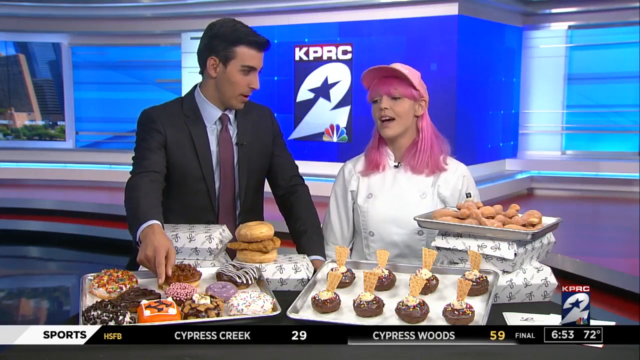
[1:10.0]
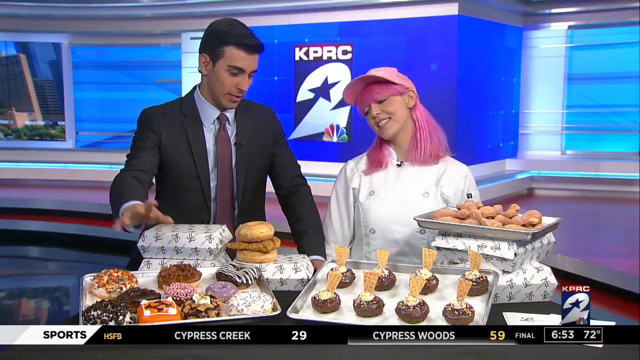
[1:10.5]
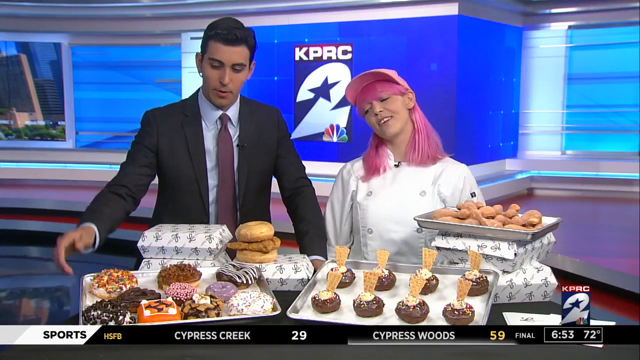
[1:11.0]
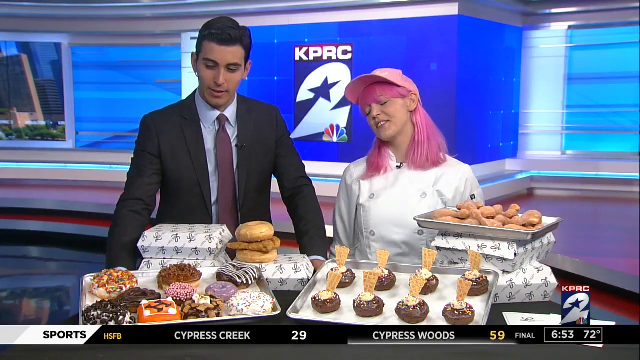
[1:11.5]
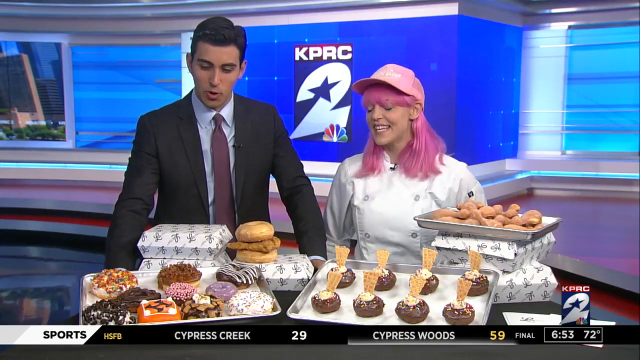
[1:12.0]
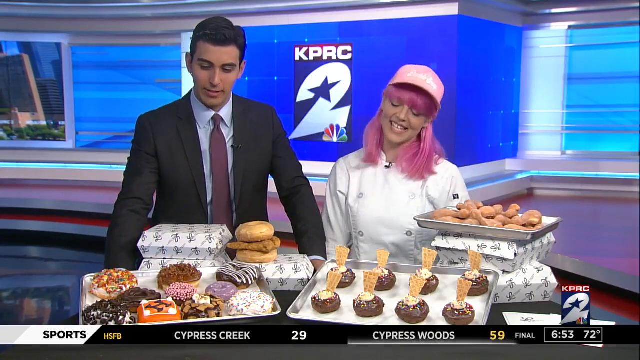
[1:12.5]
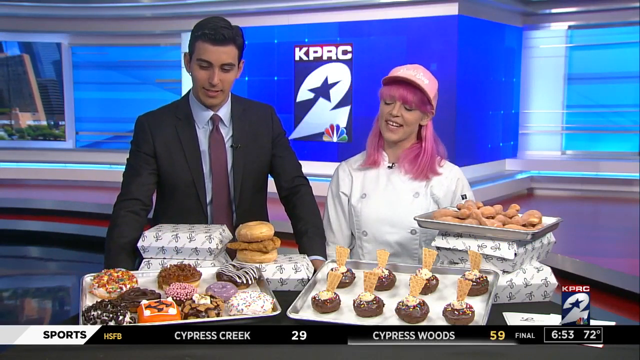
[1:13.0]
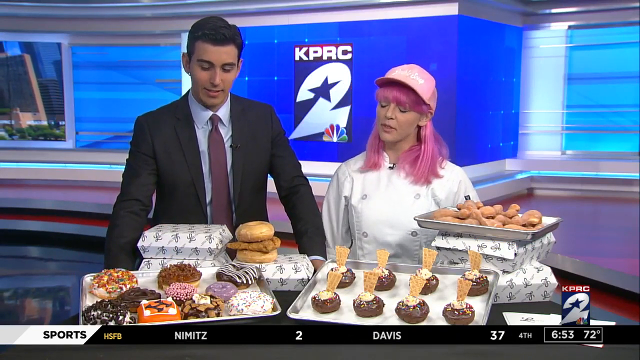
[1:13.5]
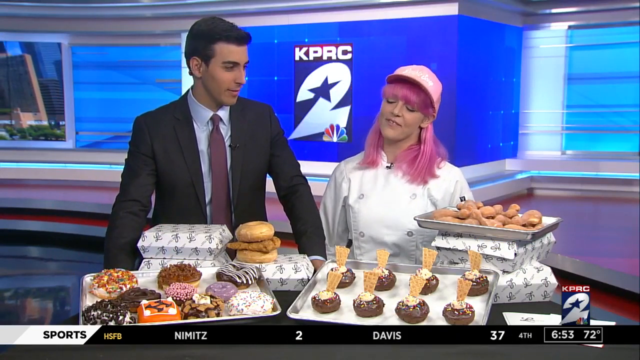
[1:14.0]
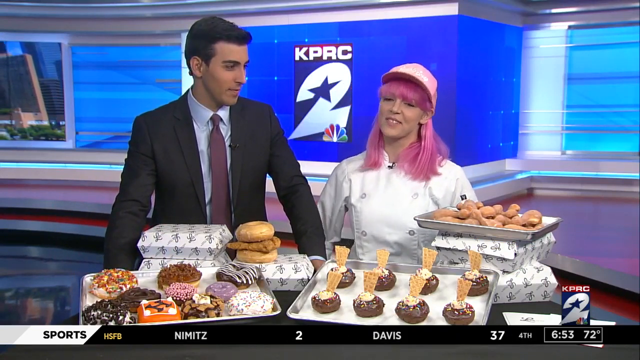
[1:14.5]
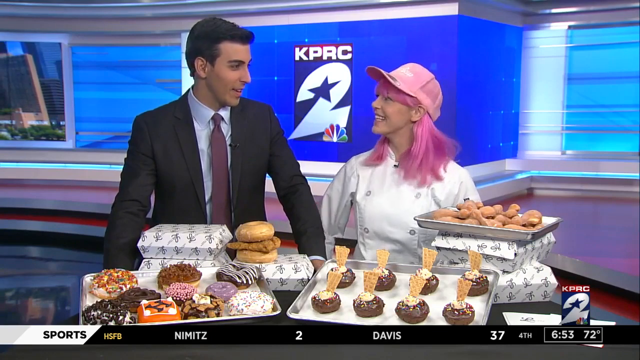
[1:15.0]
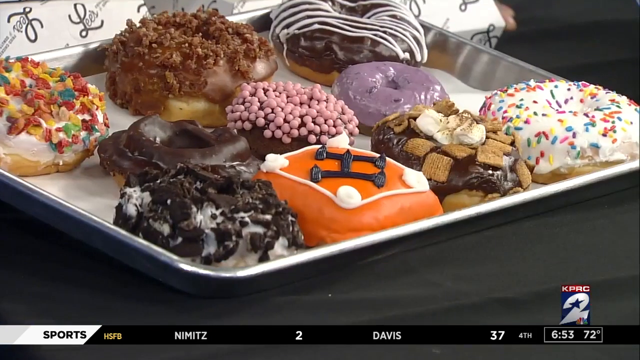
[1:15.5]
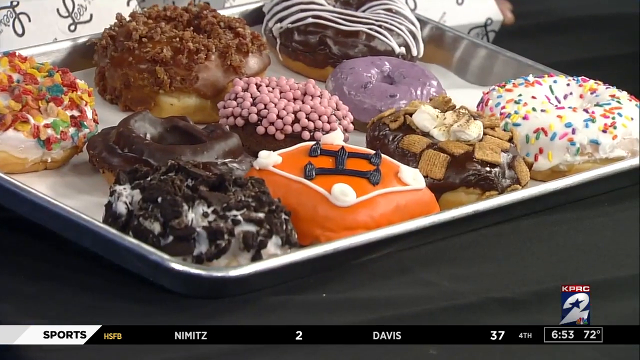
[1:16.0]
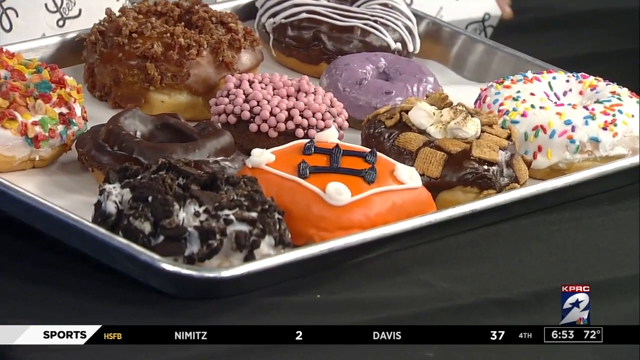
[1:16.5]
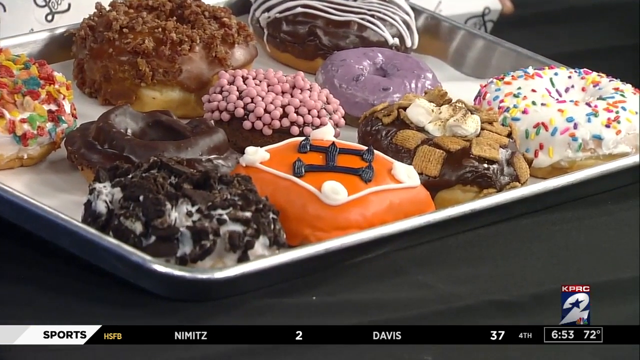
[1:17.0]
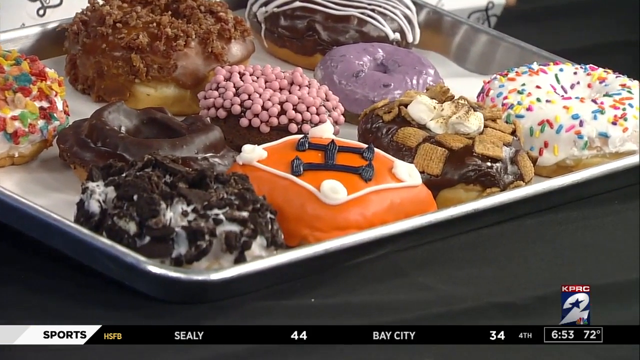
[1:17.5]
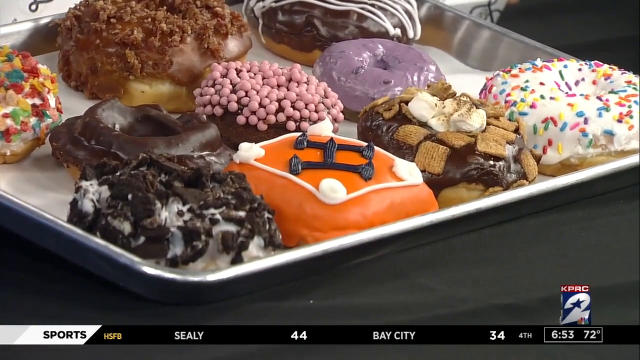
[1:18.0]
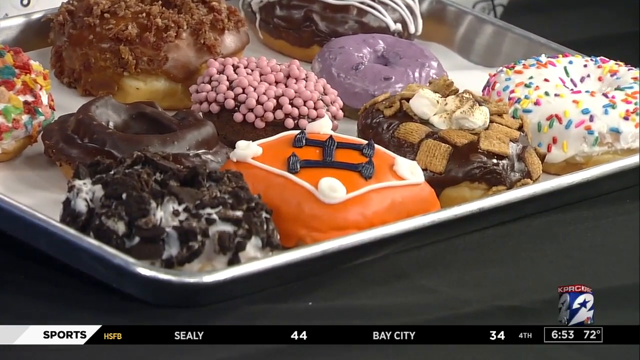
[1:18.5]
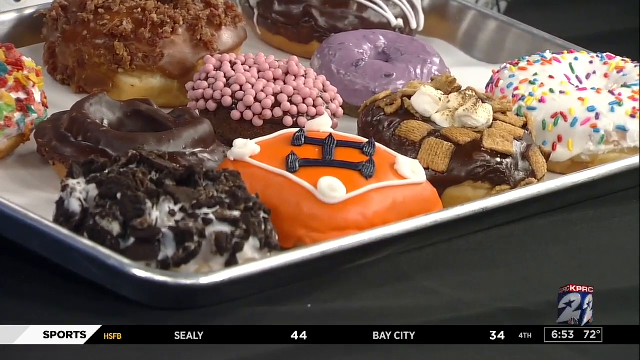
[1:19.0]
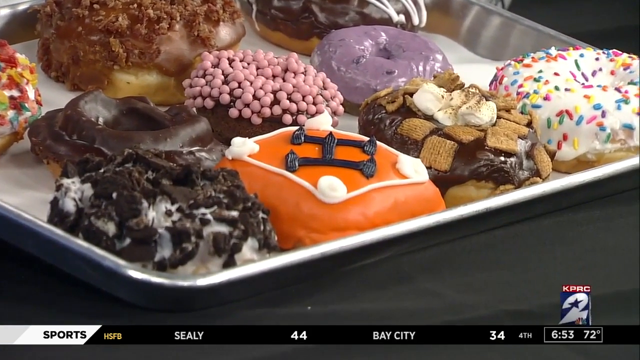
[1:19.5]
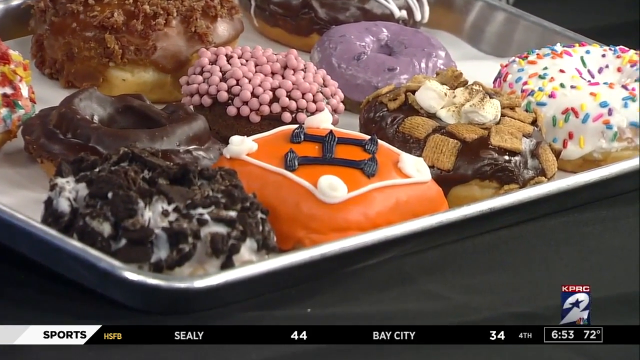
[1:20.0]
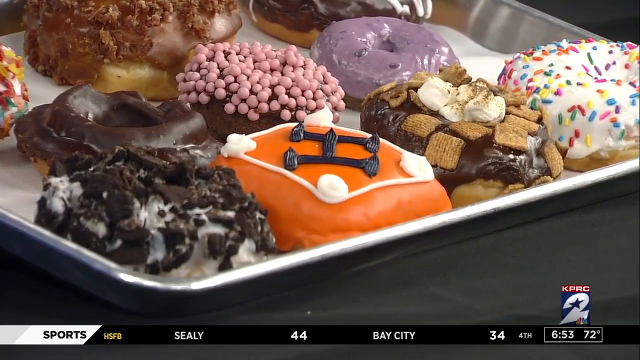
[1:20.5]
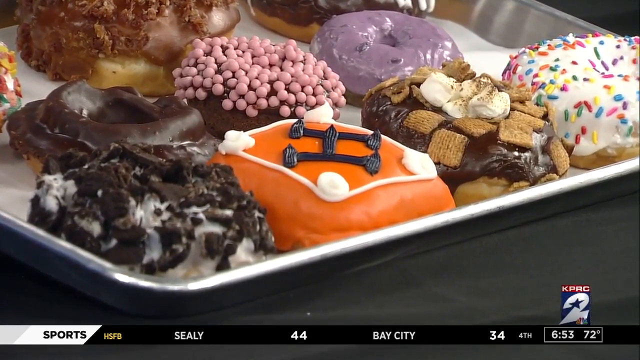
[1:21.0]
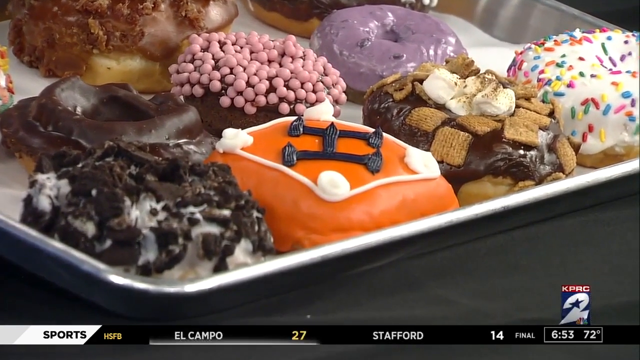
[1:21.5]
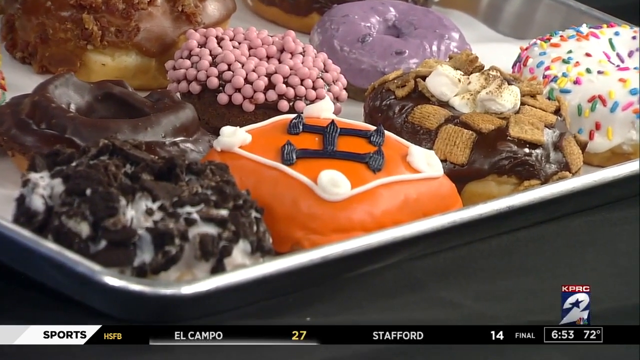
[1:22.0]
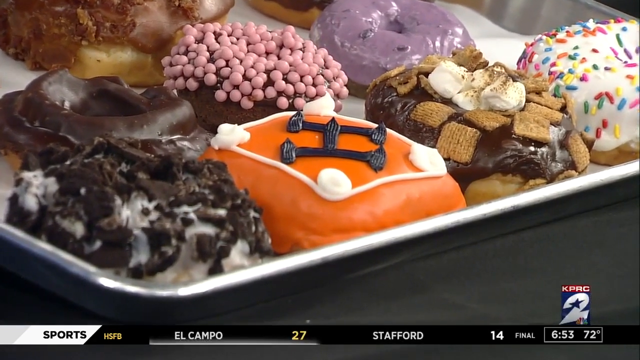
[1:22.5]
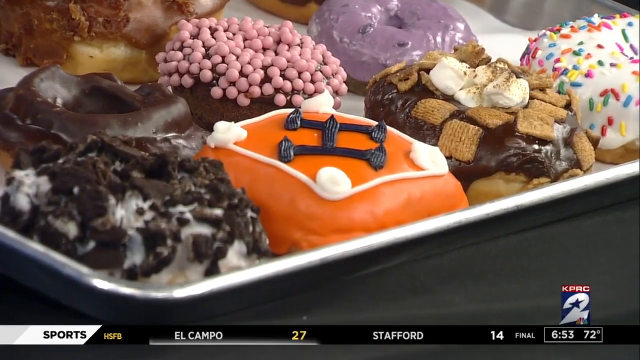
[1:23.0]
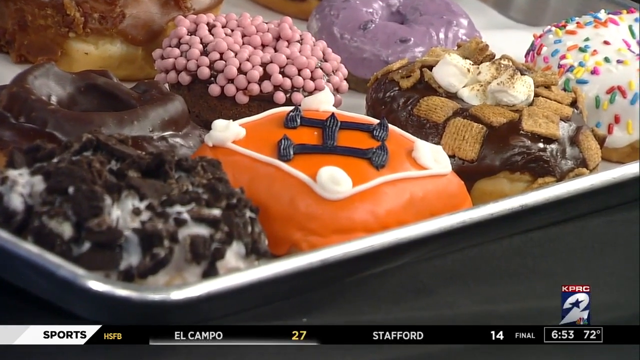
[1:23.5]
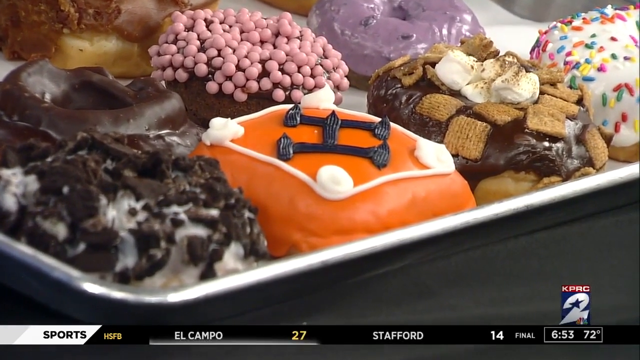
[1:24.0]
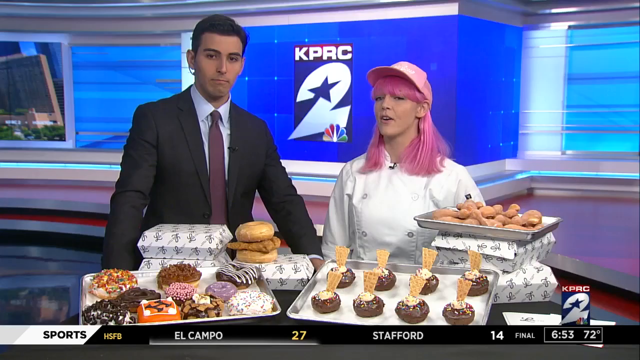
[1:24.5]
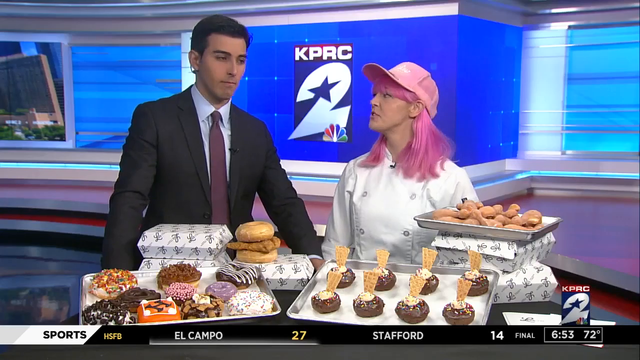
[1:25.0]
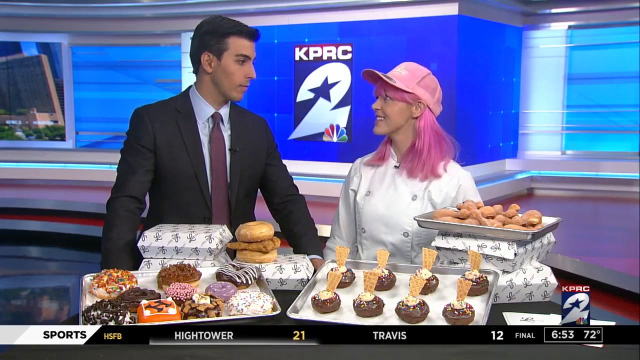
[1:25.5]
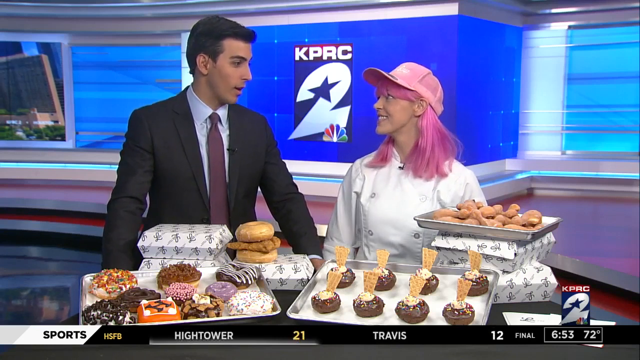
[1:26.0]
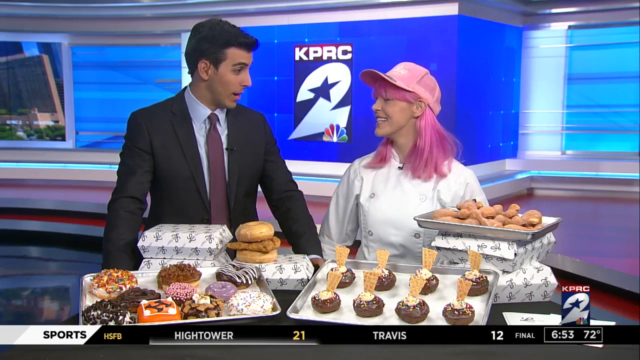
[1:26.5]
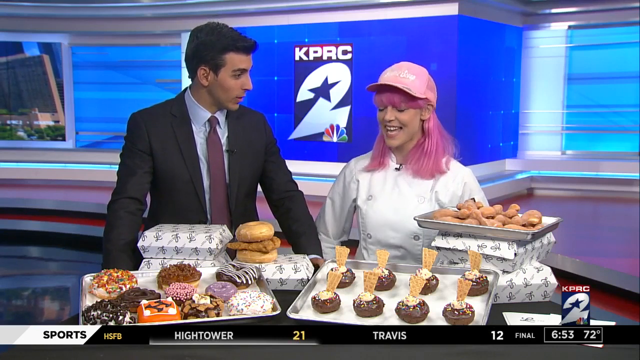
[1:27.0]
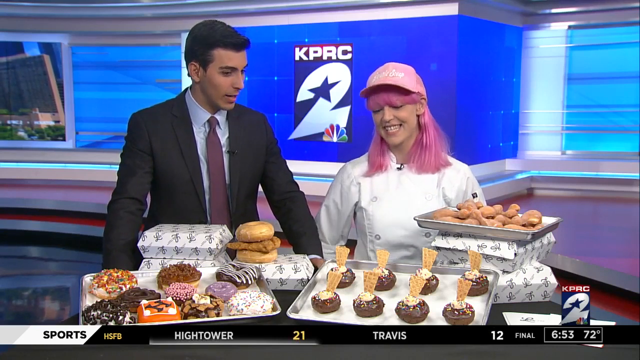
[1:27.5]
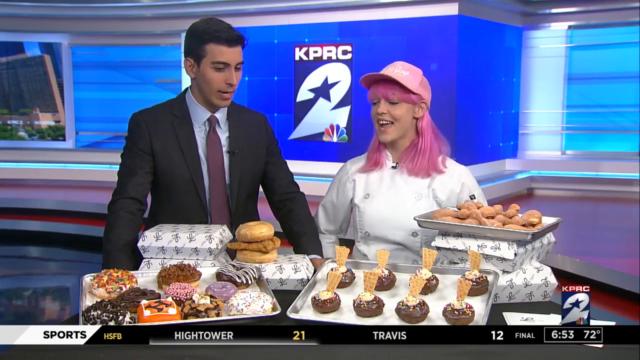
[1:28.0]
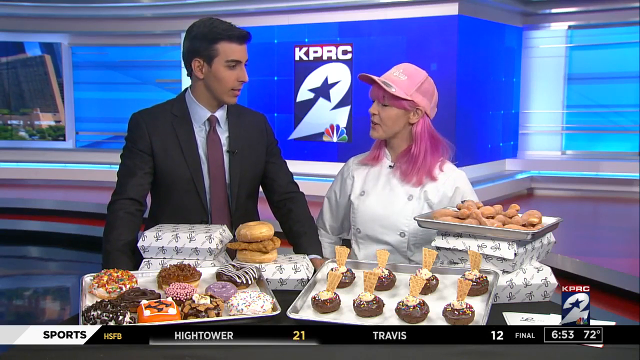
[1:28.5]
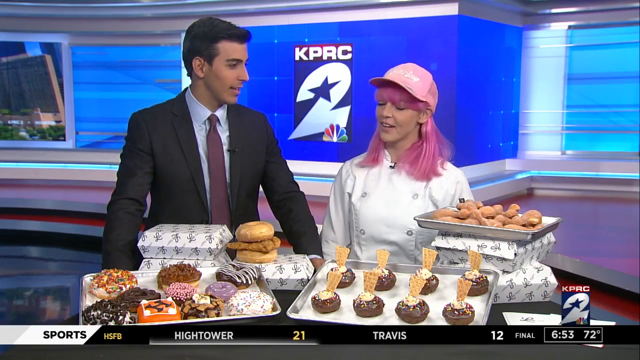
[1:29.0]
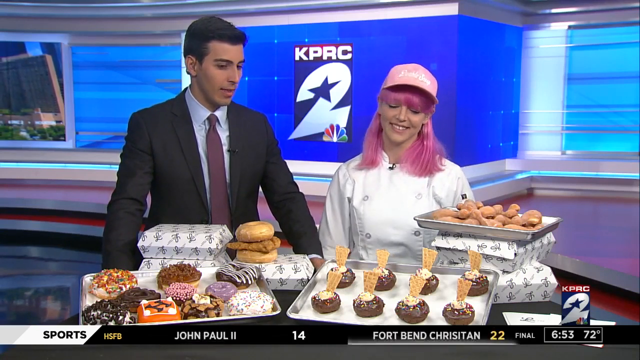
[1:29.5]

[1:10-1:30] A show from KPRC2 is presented by a man wearing a black suit. A woman baker has brought samples of her donuts, which are all laid out in front of the two as they talk. The donuts are designed in different ways. As they speak and point at the donuts, a tray with other donuts is visible behind, and the packaging she uses for the donuts when someone buys them is shown.